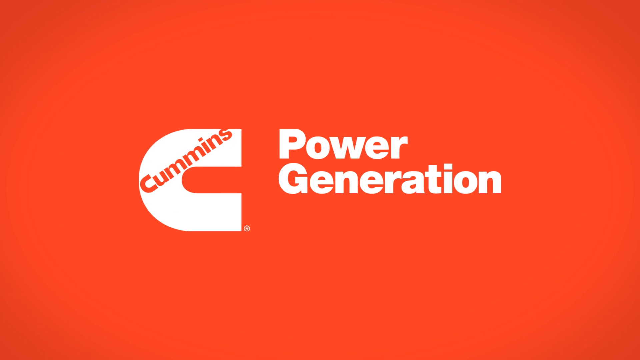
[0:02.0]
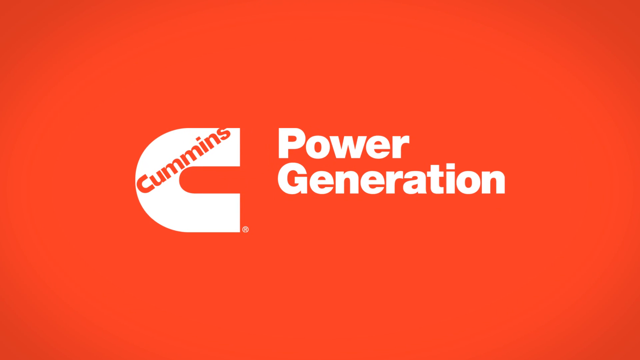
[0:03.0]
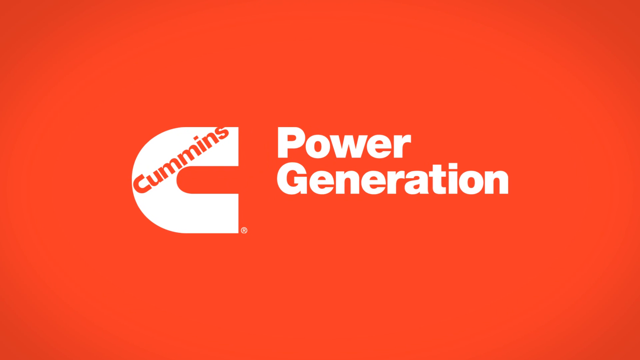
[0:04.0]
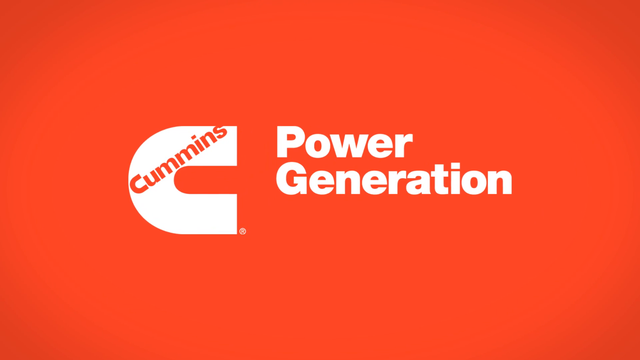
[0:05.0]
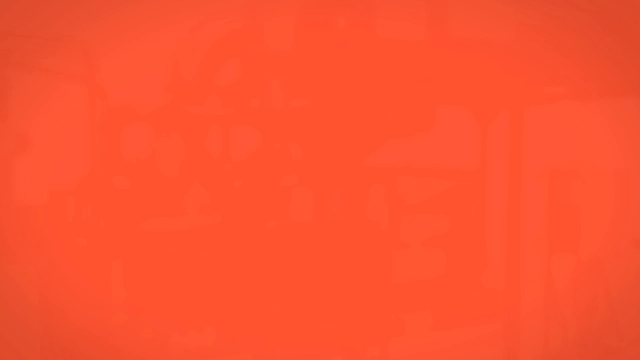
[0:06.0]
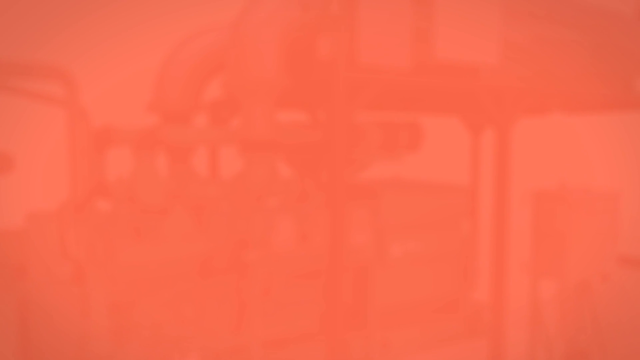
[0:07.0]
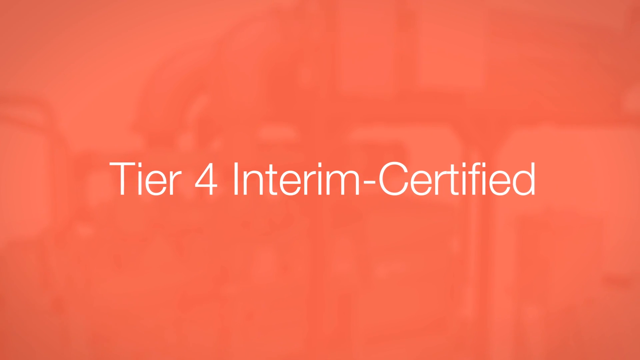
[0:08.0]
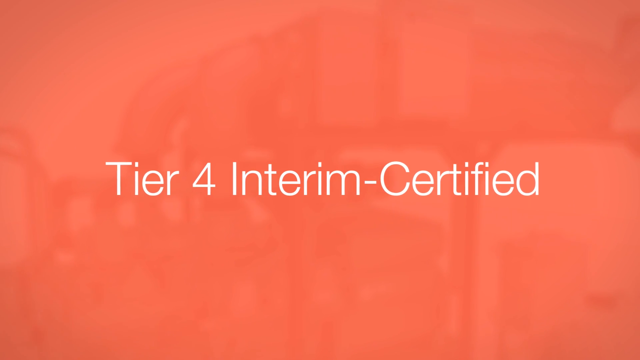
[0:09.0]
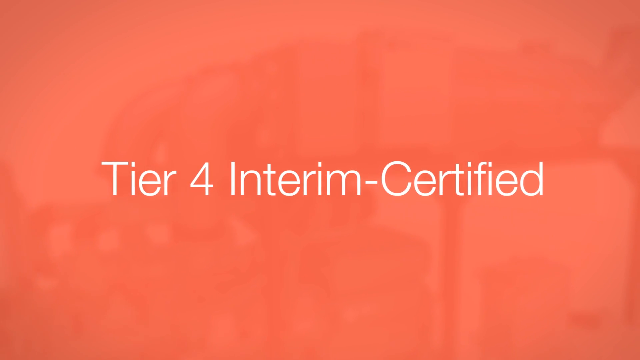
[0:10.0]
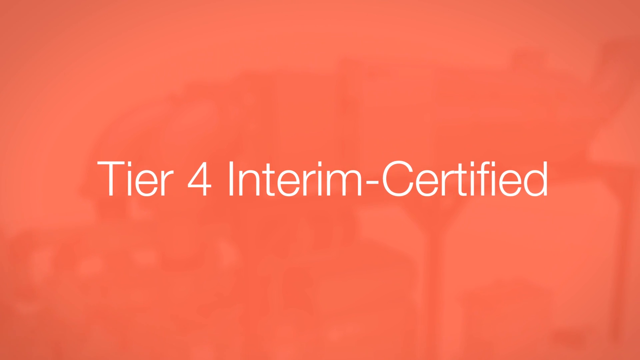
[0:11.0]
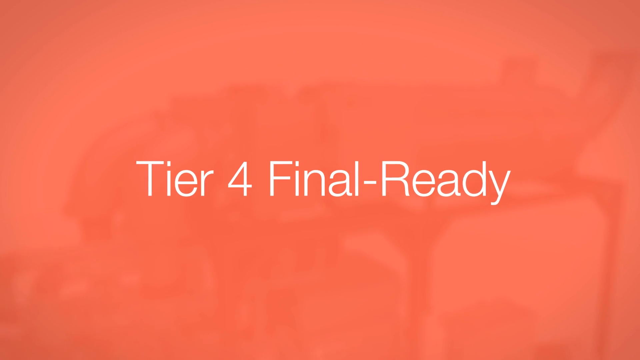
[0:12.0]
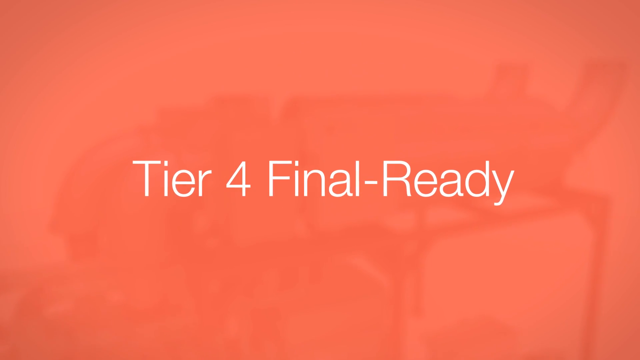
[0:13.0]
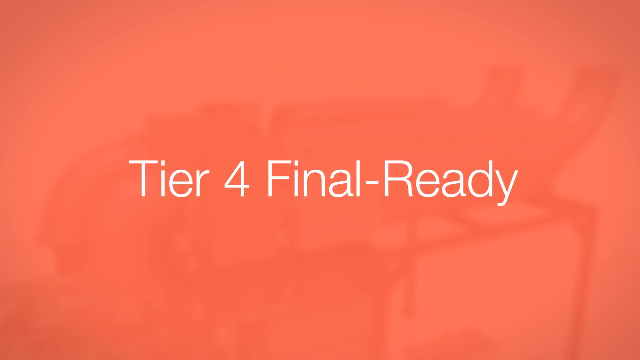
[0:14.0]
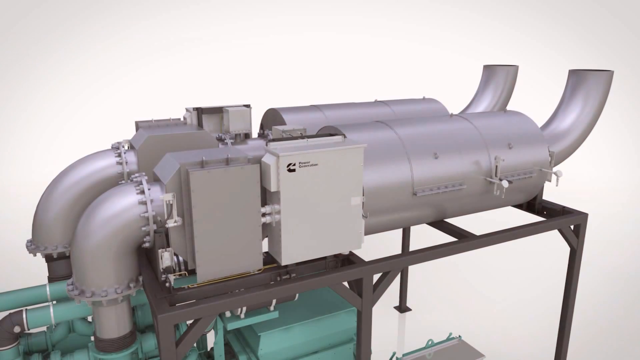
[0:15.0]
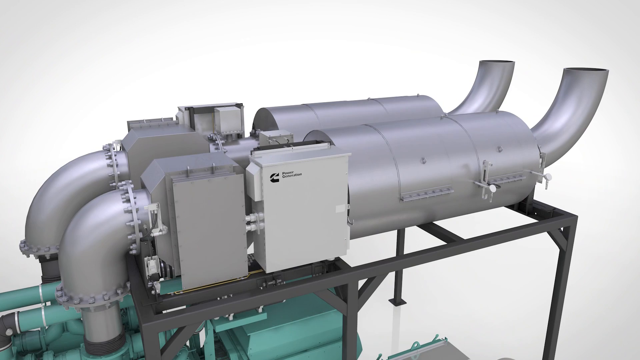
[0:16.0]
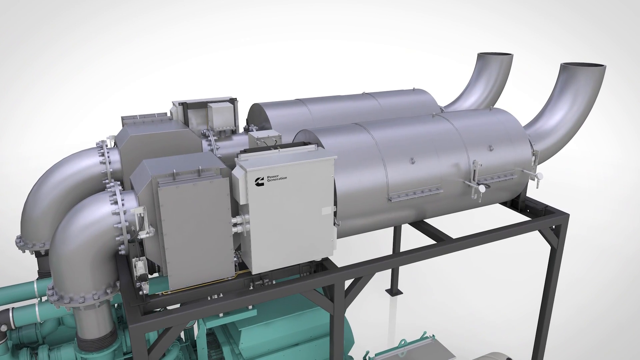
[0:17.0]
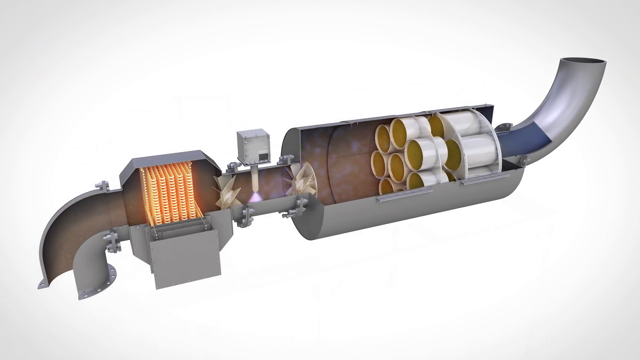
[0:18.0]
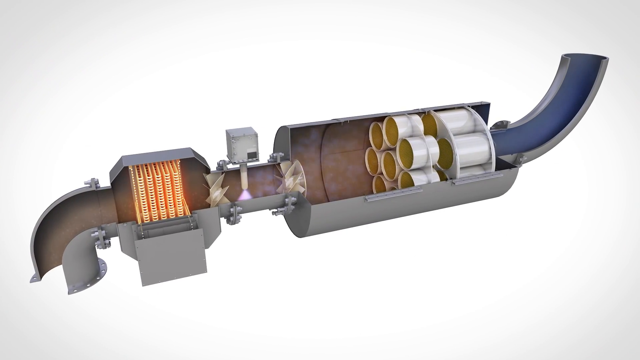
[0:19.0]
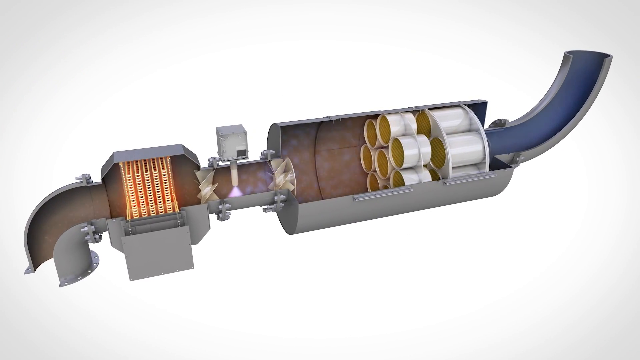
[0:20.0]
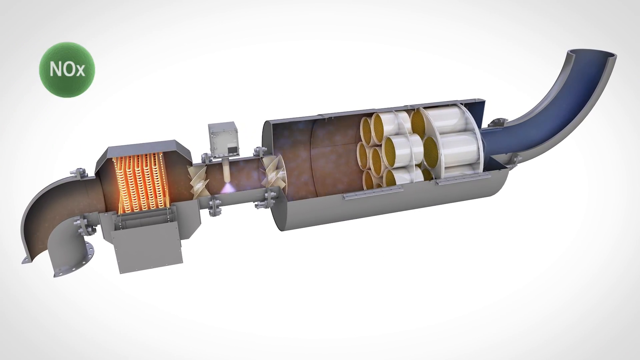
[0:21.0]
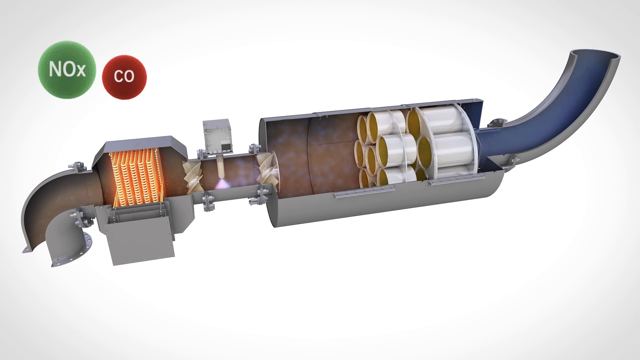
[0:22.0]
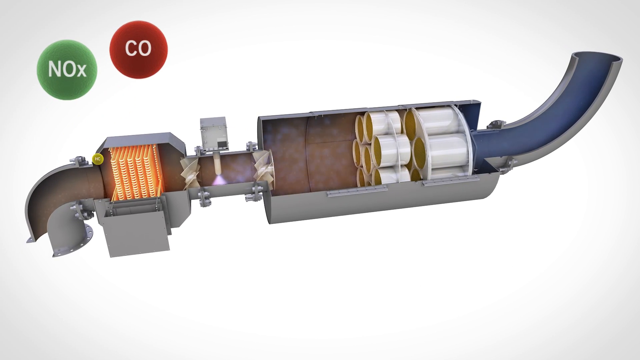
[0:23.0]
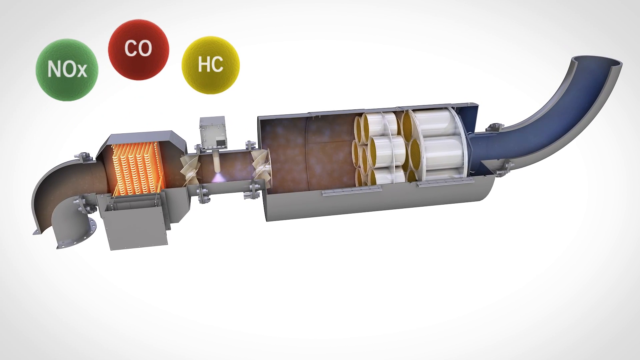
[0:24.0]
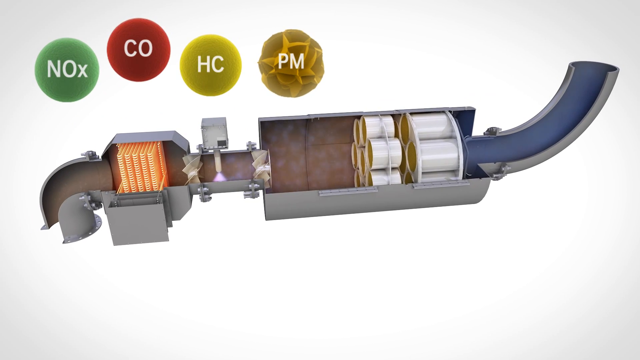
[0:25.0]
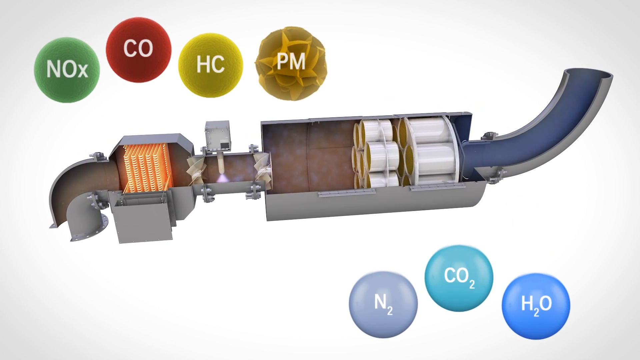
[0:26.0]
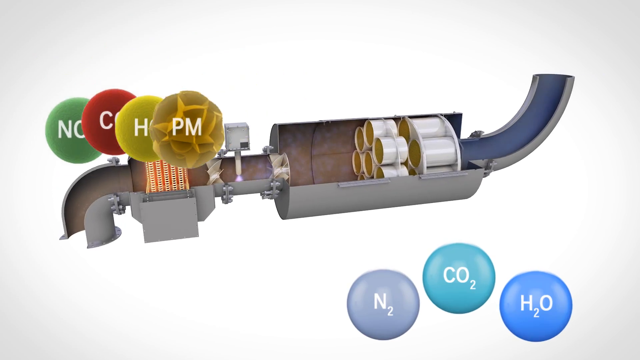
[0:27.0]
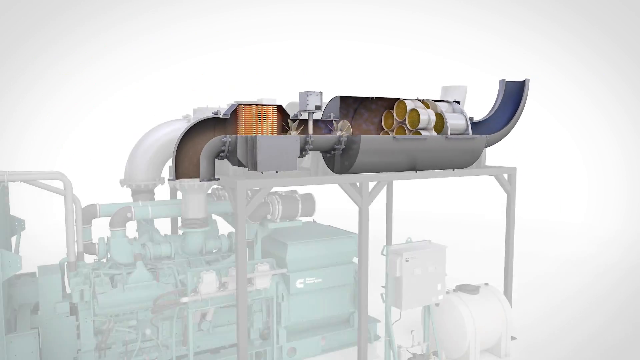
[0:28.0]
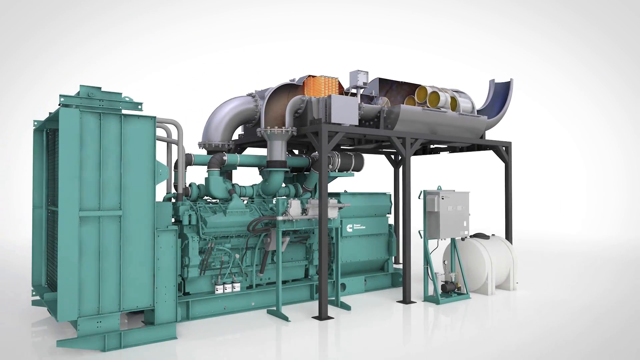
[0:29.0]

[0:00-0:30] The video starts with a white background that fades to a red background with "power generation" in white. On the left side is what looks to be a white magnet silhouette, and "cummins" is written diagonally. Next, something is happening in the background, but a red translucent layer covers it so it cannot really be seen, and white text reads "tier four interim certified," followed by "tier four final ready." An image of some sort of prototype appears, showing a cross section of this technology. At the top is "nox" in a green circle, then "co" in a red circle, "hc" in a yellow circle and "pm" in a textured yellow circle. On the bottom are three circles: n2, co2 and h2o. The image sort of transitions into the entire contraption, which seems to be connected to another large turquoise contraption with lots of tubing.